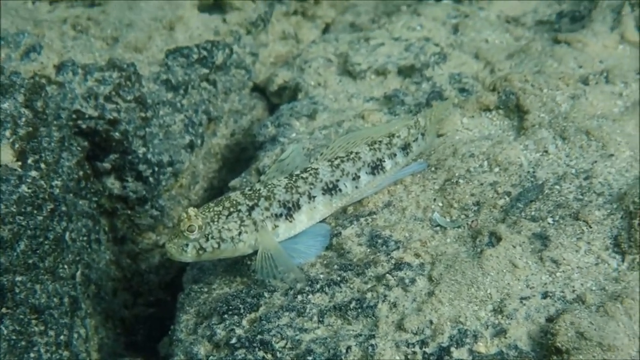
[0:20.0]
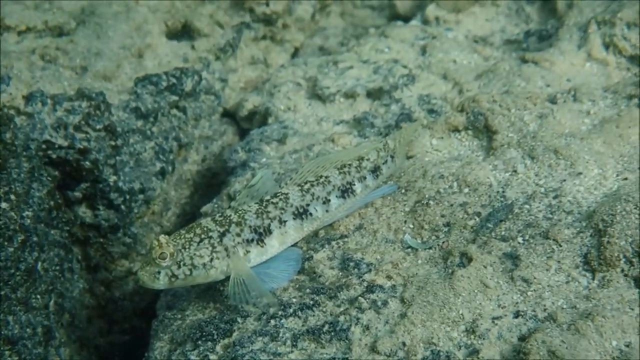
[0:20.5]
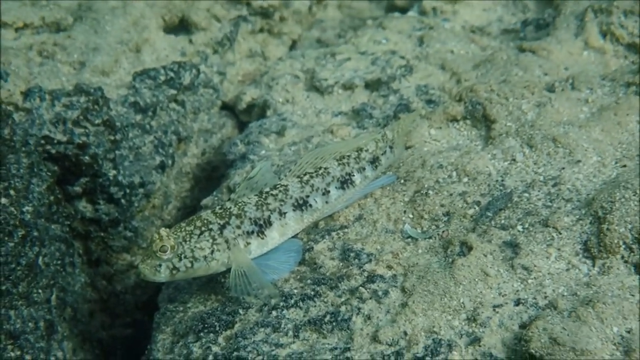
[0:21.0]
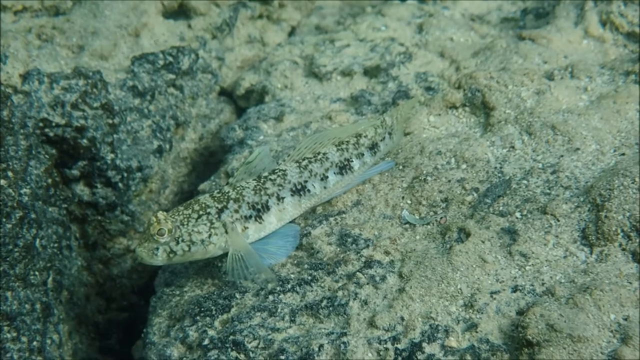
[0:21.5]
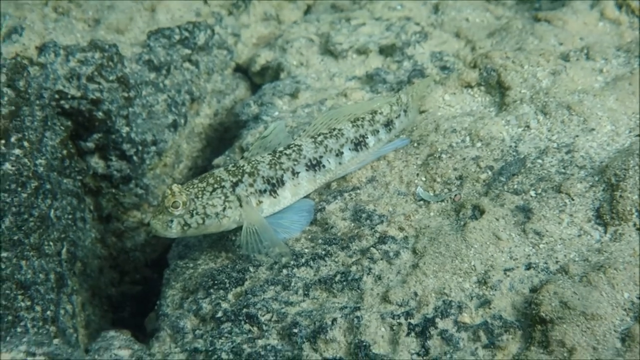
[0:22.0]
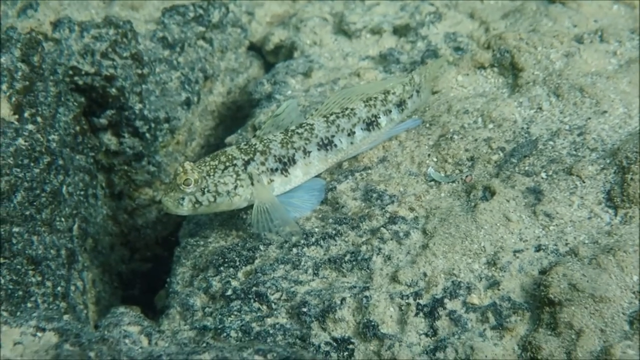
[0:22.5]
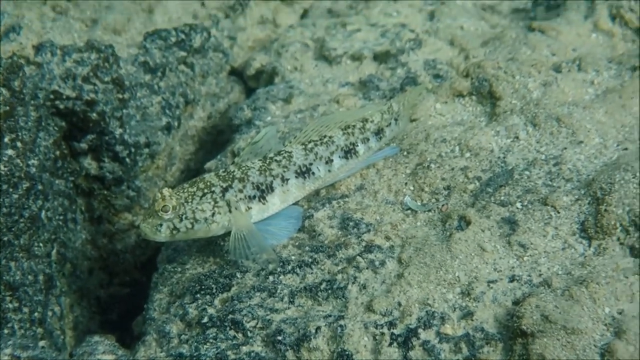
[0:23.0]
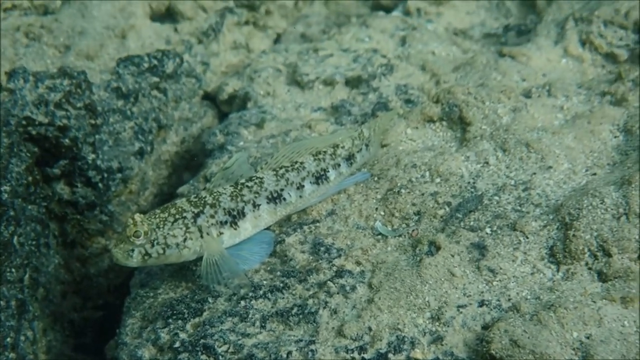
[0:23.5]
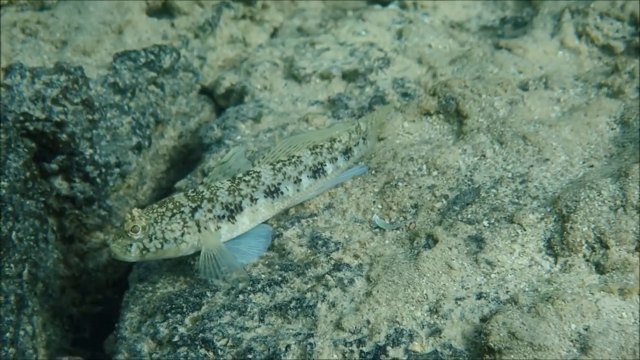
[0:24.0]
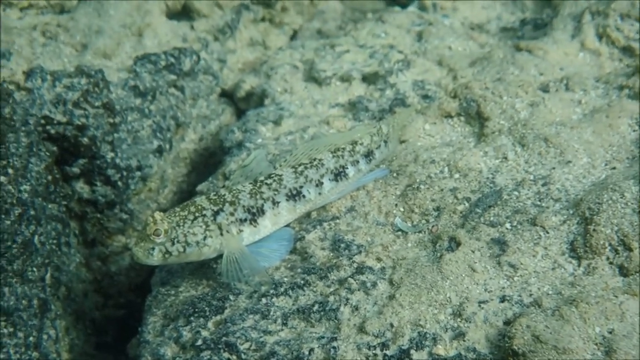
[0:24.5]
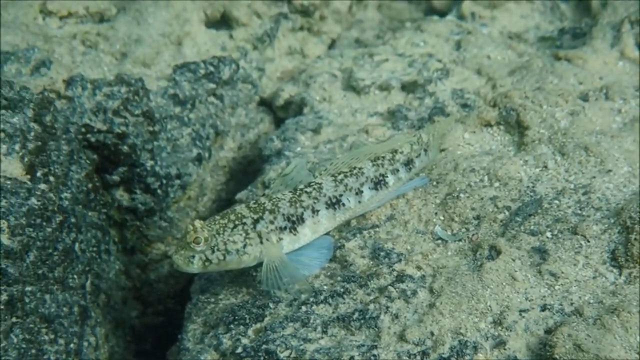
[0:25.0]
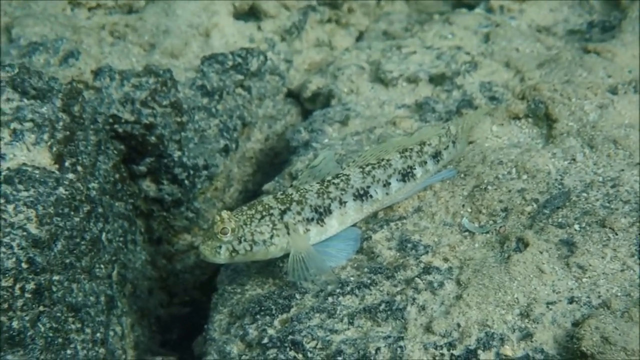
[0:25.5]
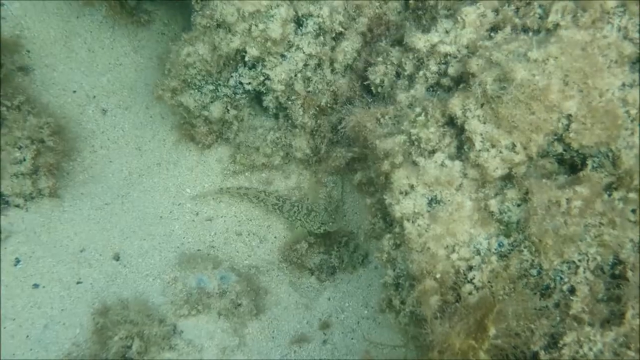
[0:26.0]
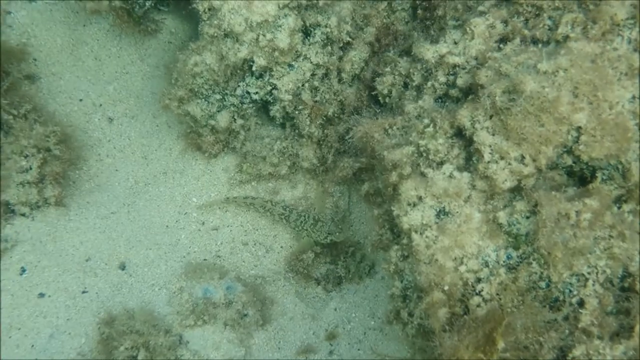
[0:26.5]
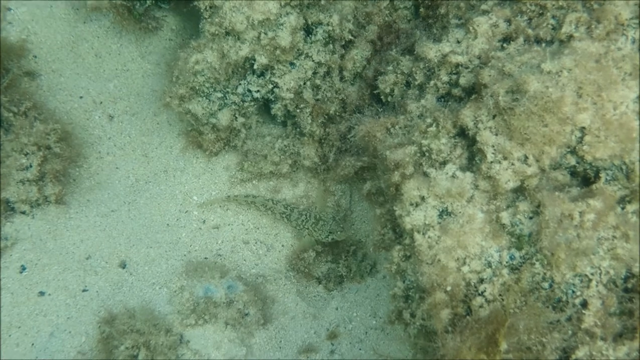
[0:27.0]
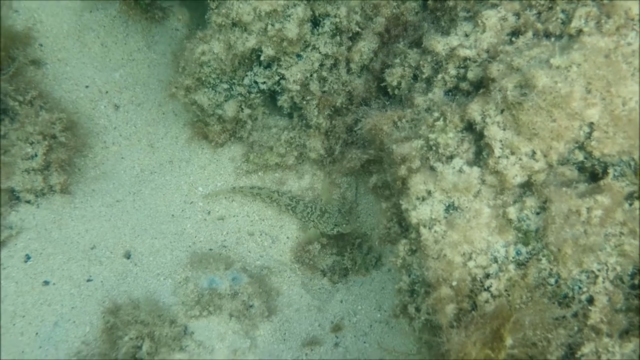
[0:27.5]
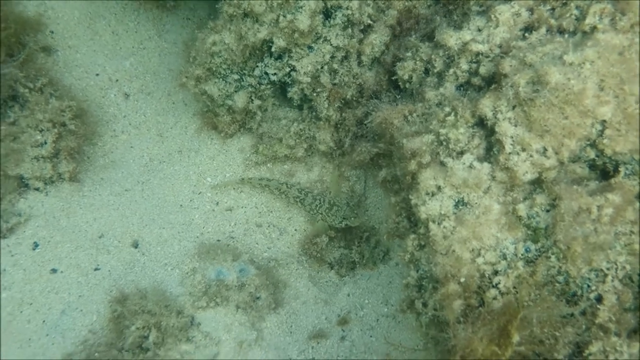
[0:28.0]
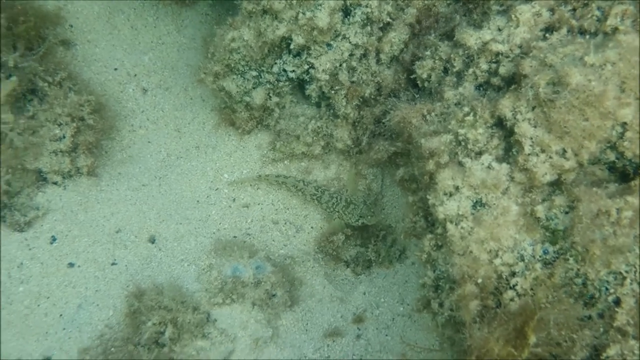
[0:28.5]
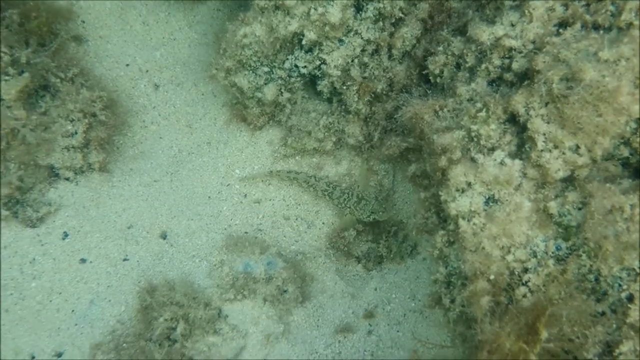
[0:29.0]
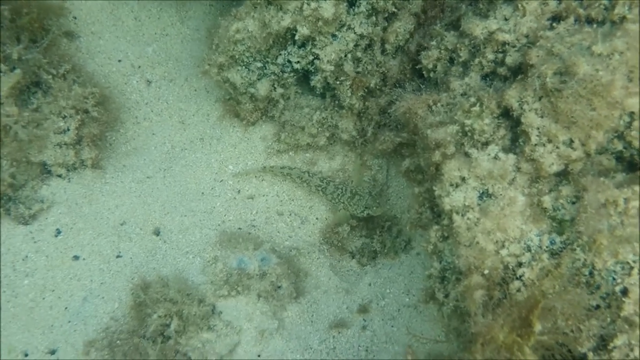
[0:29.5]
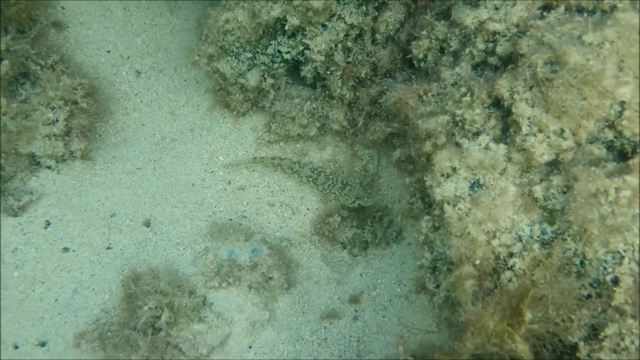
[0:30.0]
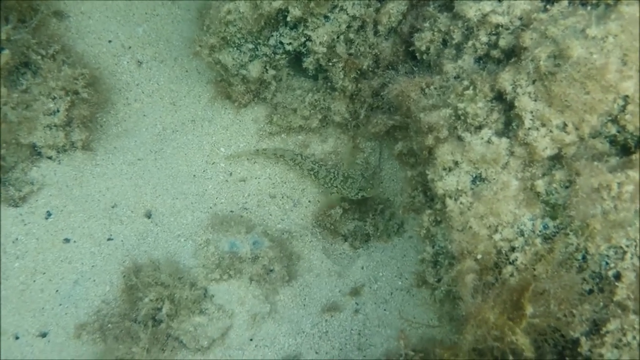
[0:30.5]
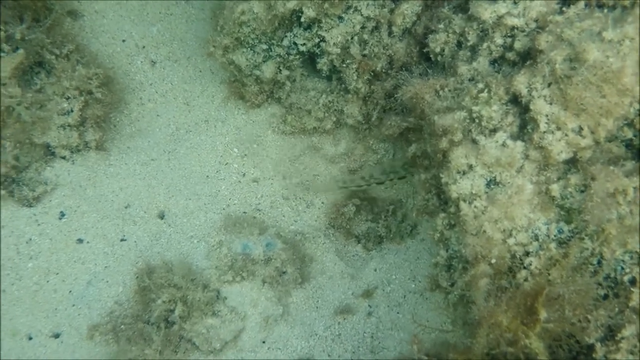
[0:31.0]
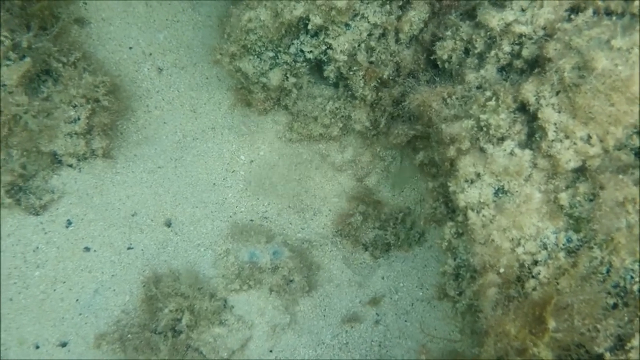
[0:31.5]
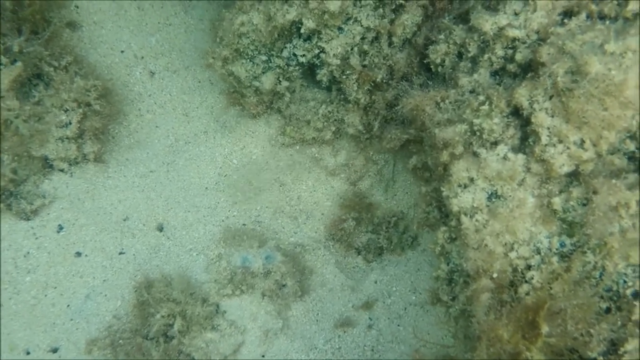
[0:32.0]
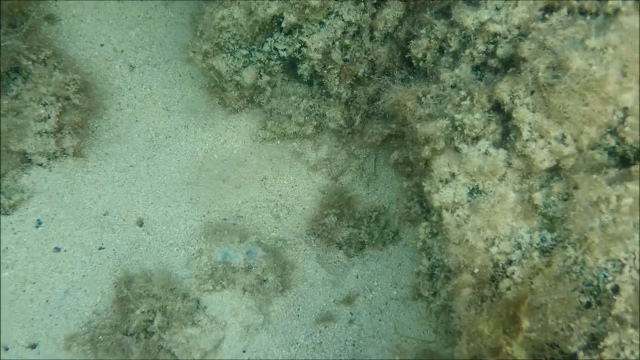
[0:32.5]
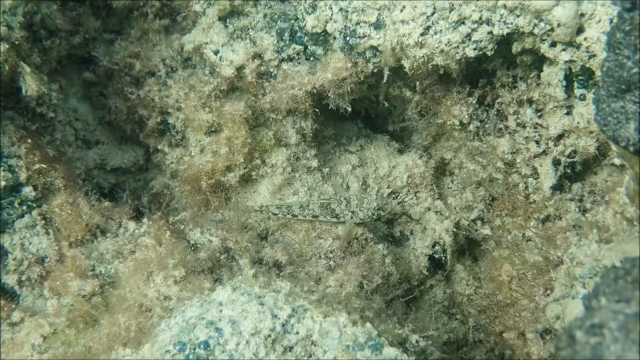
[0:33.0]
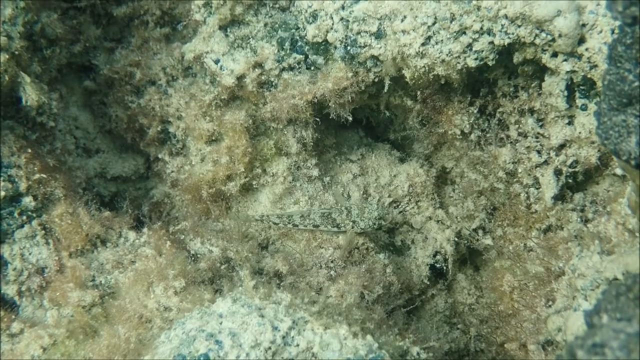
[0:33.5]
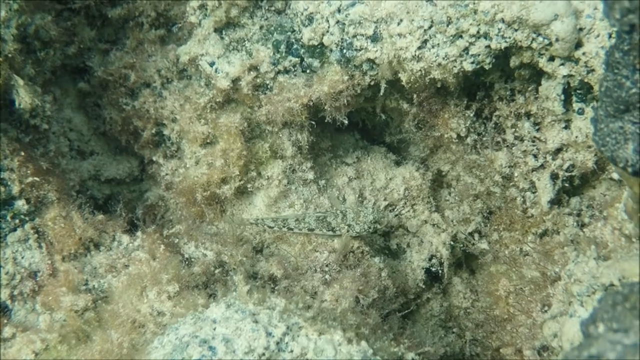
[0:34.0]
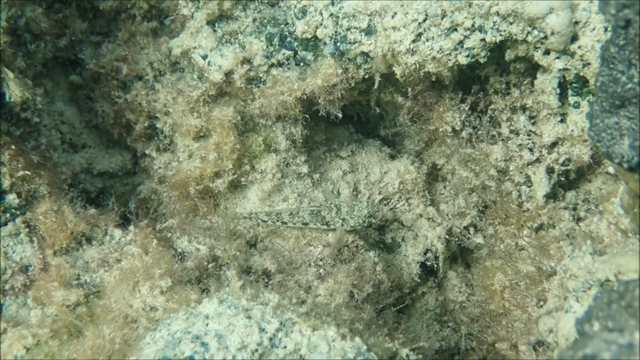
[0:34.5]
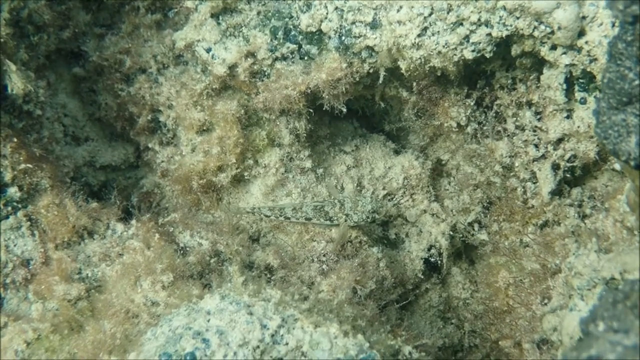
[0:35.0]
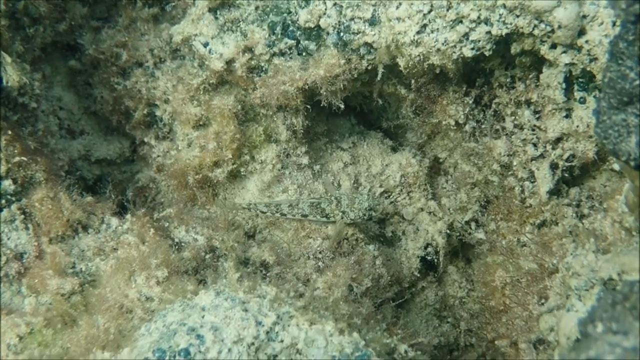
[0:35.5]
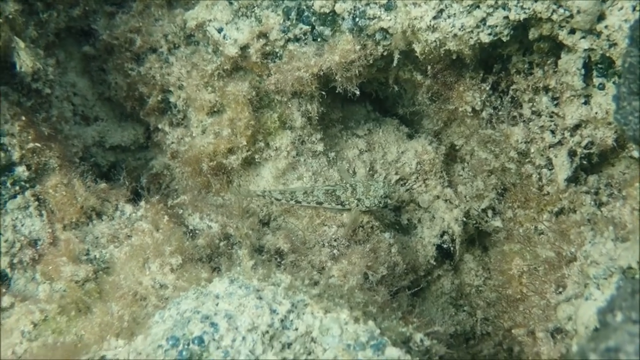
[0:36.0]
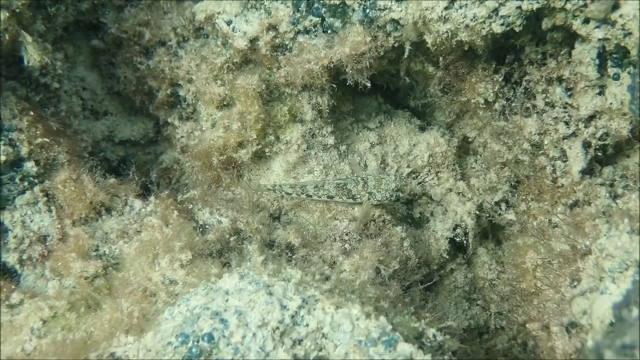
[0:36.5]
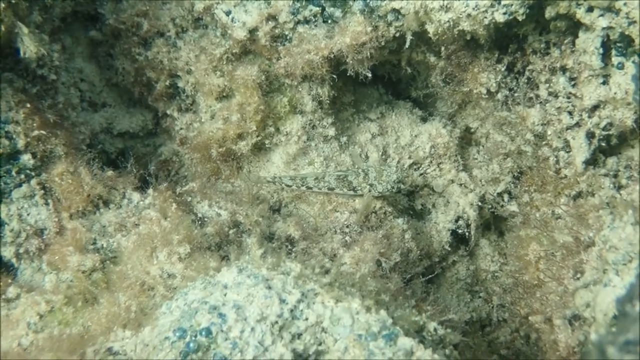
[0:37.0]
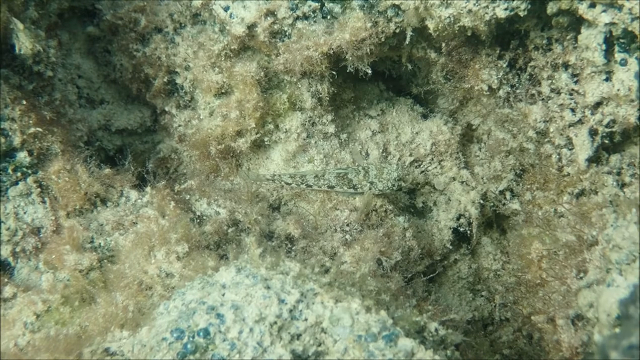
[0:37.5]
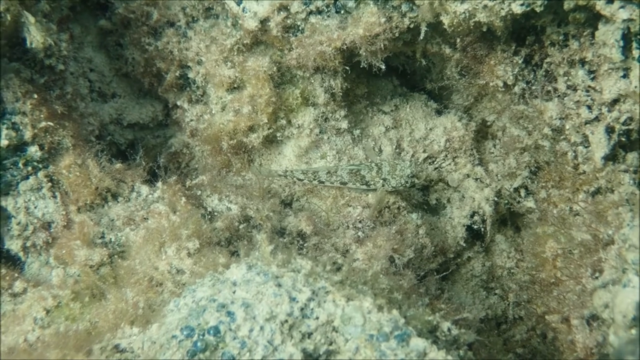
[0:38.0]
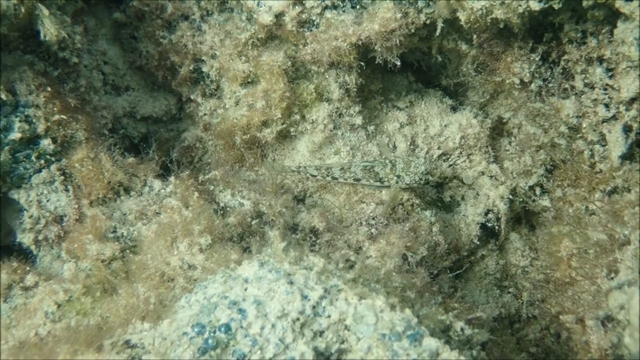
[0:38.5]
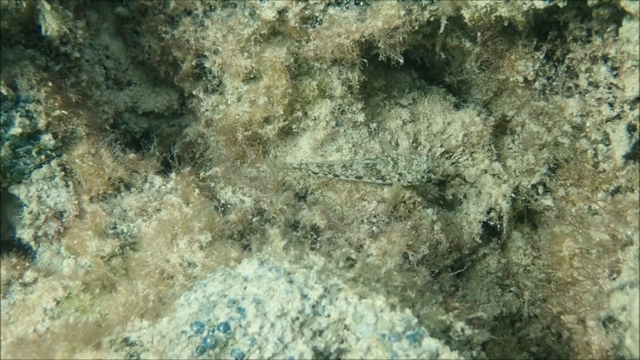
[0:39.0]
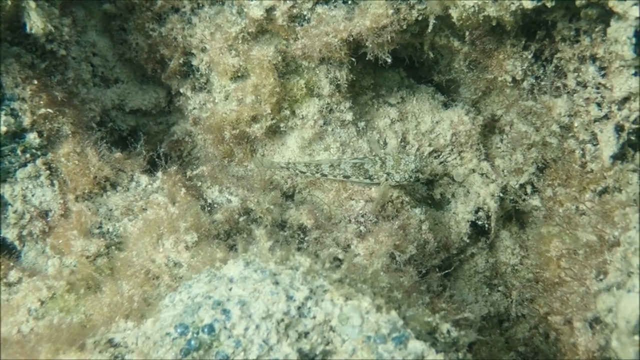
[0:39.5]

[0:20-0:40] The fish, apparently the Couch's goby, makes no movements at first, lying against the sand and the rock and camouflaging itself very neatly. Its colors pretty much match the coral or reef, and where it is not black or white, it matches the color of the sand. The sand is muddy, beige in places and whiter or grayish in others. The video then transitions to an overhead view of the fish camouflaging, and this time it quickly moves and swims underneath the gray reef it is near. The last view shows what seems to be the same fish camouflaged against a different reef or coral that is more beige, messier and less black and white, with the Couch's goby hiding itself there.